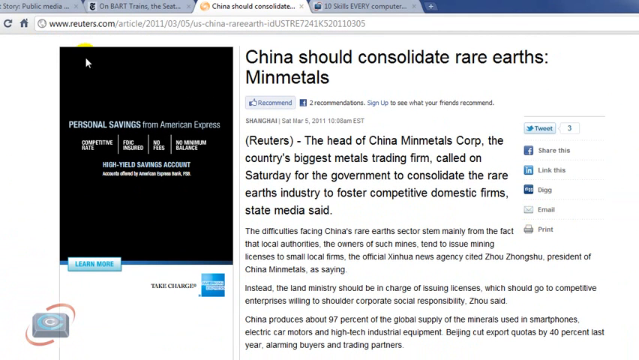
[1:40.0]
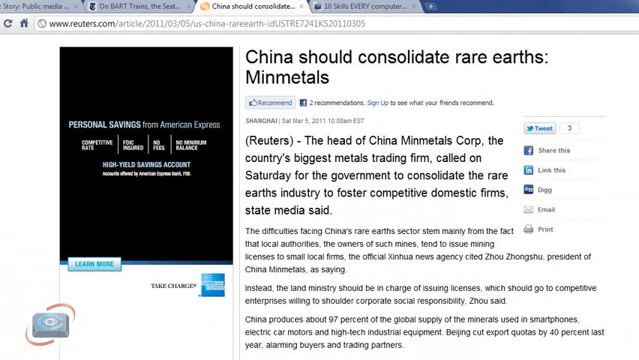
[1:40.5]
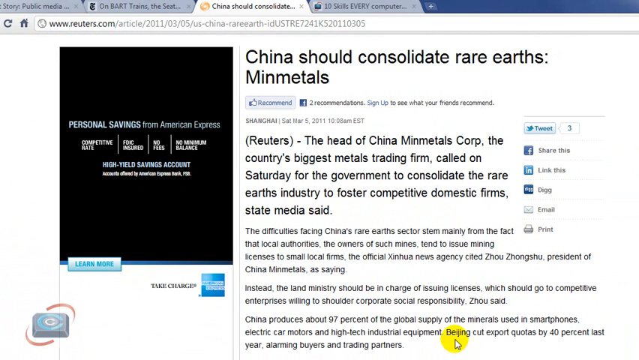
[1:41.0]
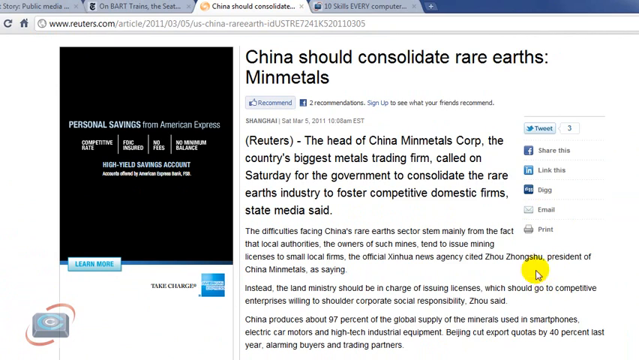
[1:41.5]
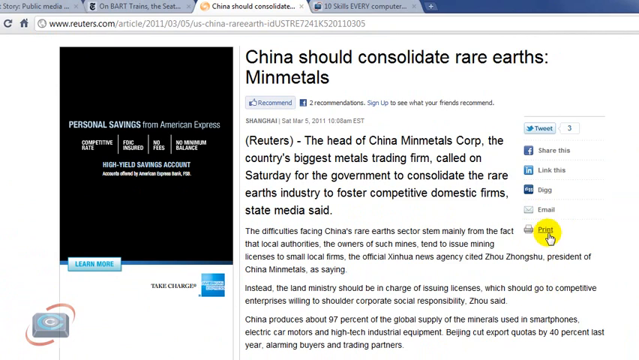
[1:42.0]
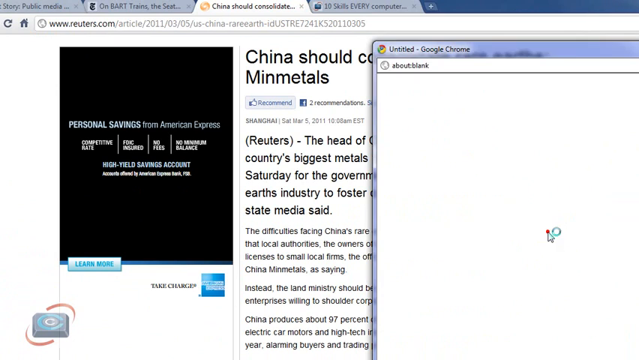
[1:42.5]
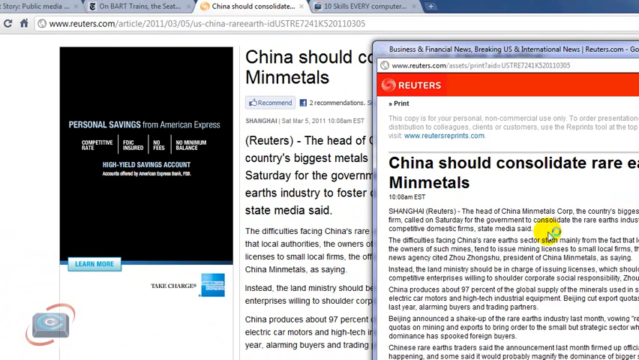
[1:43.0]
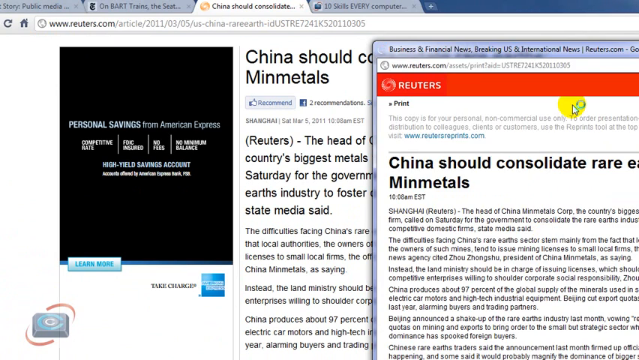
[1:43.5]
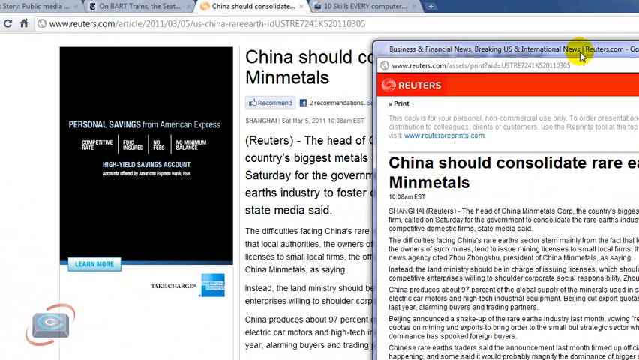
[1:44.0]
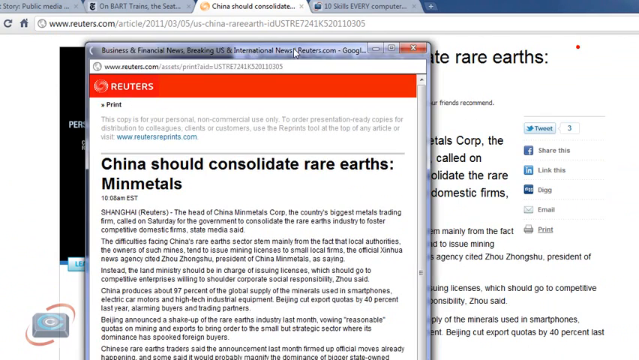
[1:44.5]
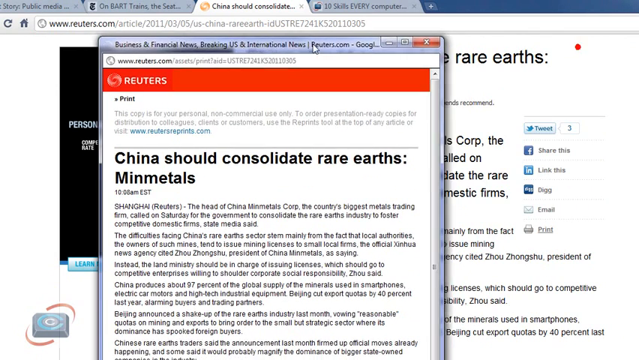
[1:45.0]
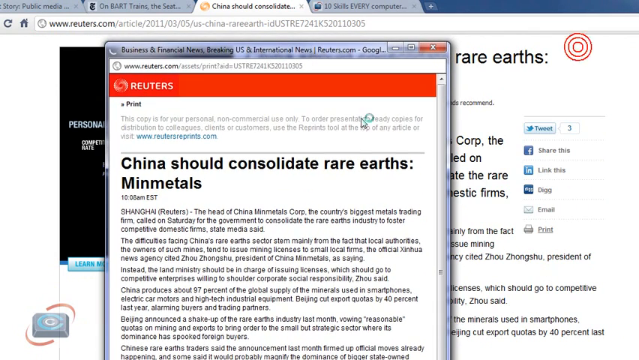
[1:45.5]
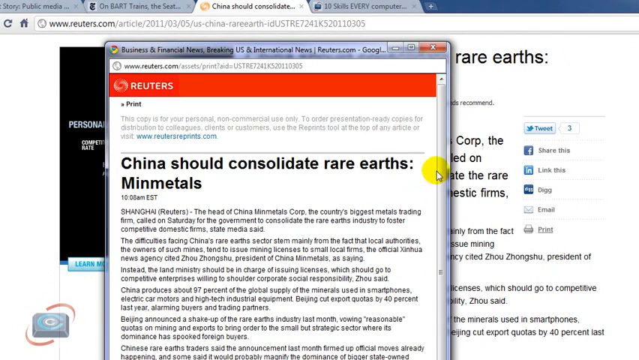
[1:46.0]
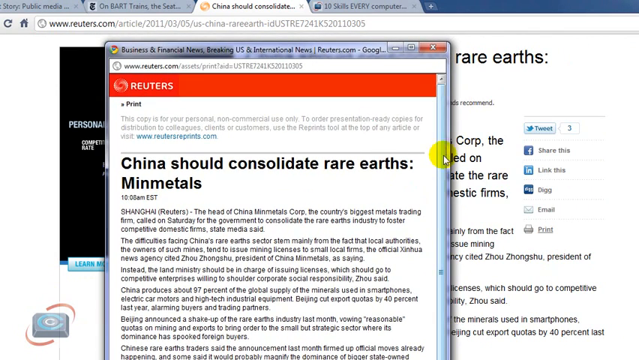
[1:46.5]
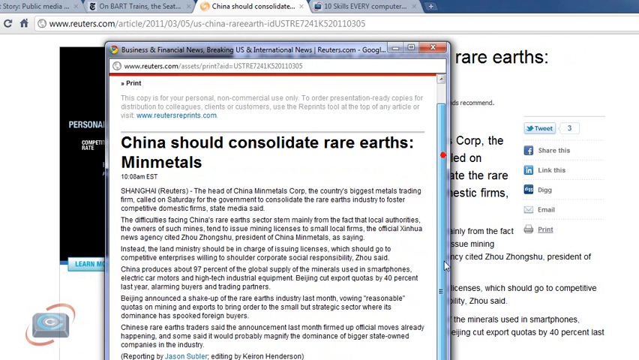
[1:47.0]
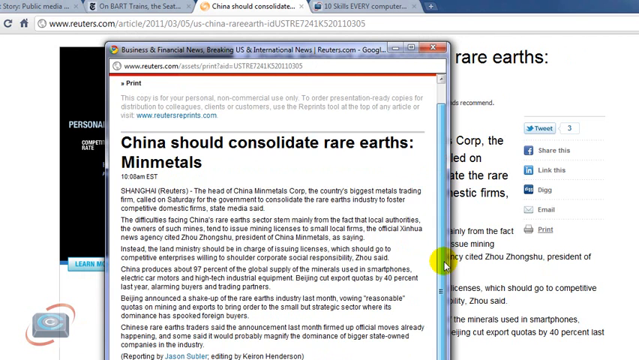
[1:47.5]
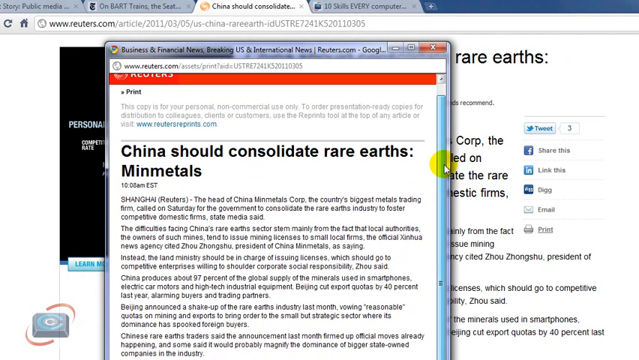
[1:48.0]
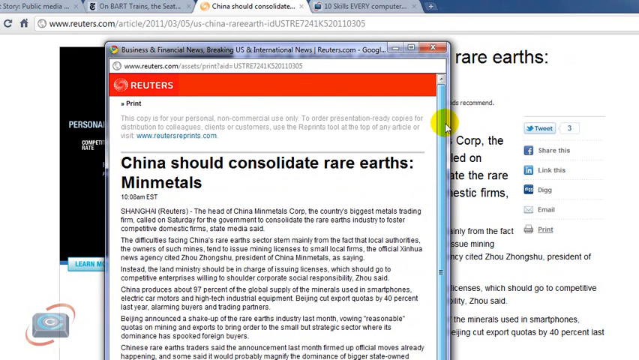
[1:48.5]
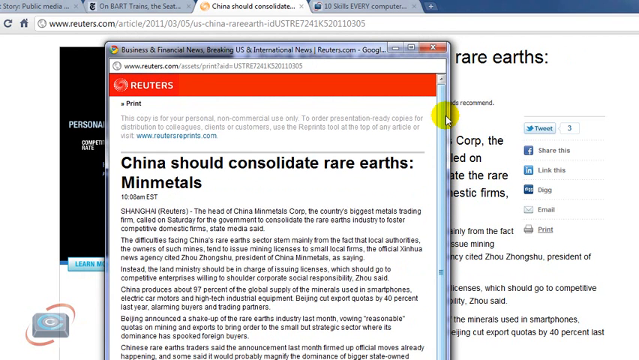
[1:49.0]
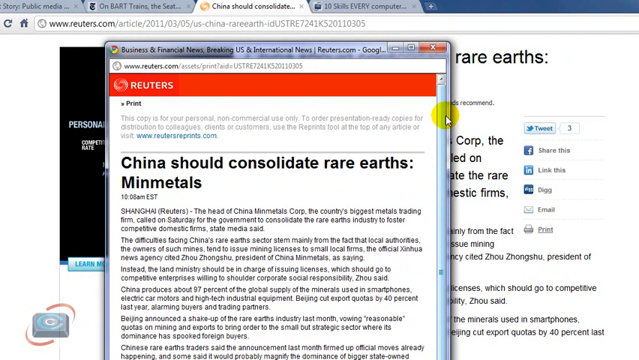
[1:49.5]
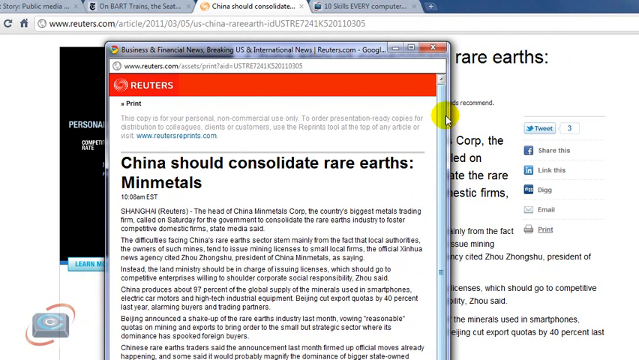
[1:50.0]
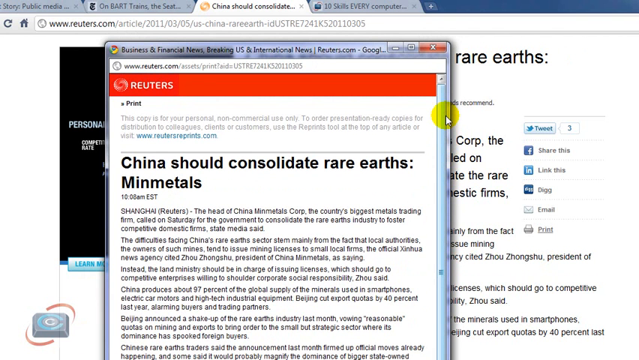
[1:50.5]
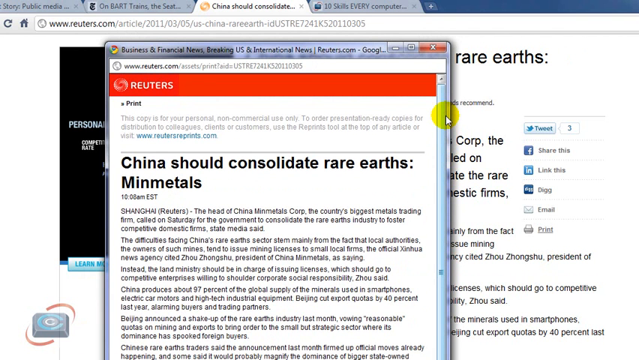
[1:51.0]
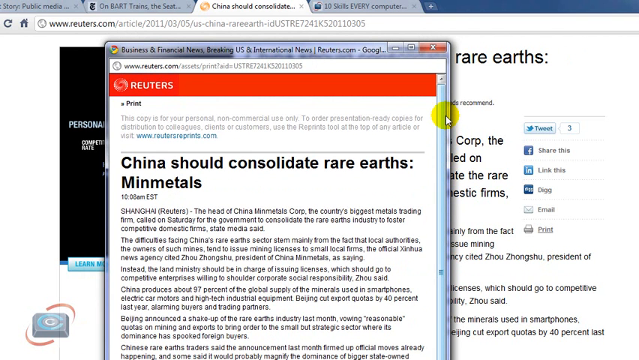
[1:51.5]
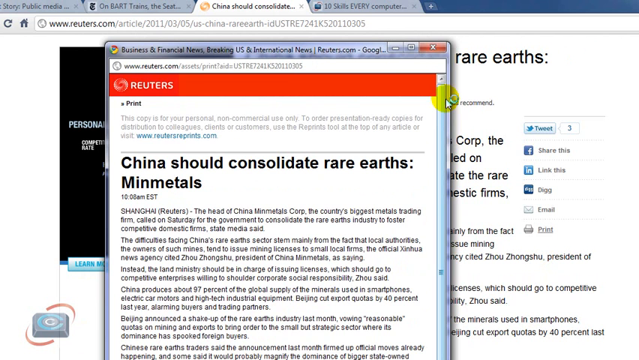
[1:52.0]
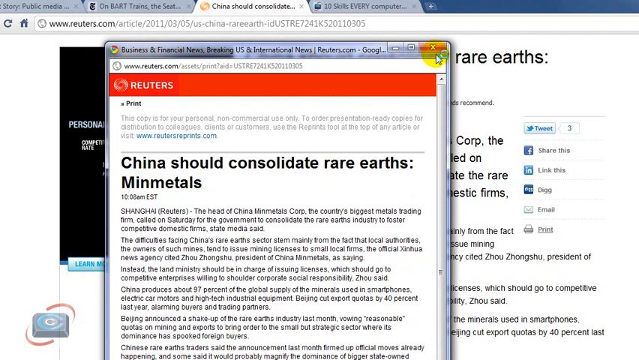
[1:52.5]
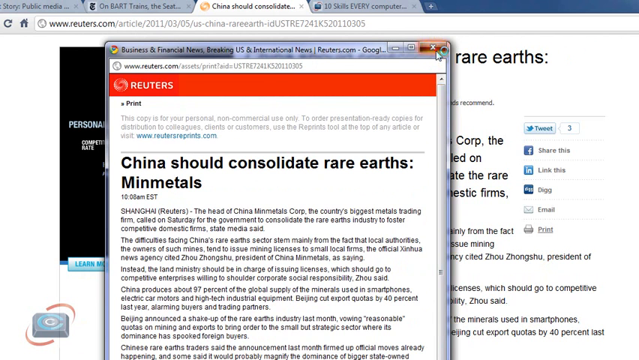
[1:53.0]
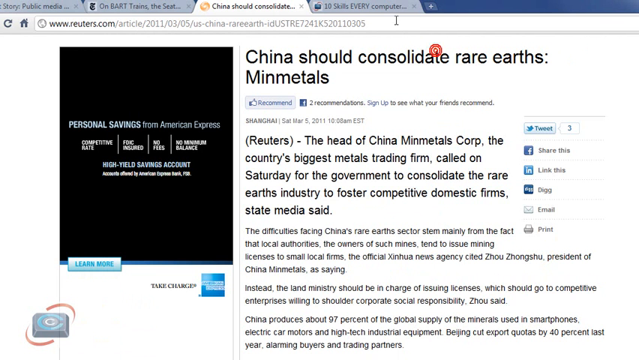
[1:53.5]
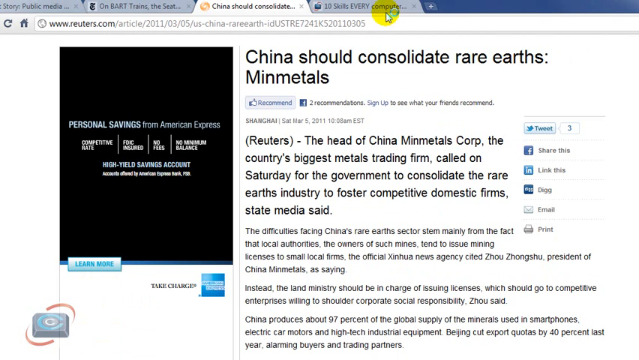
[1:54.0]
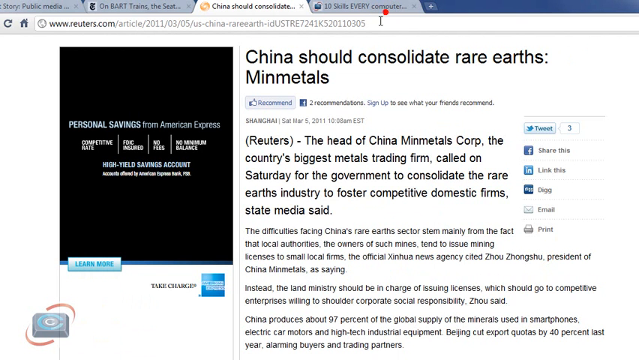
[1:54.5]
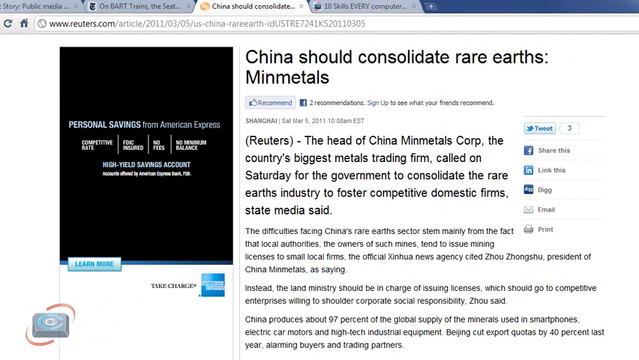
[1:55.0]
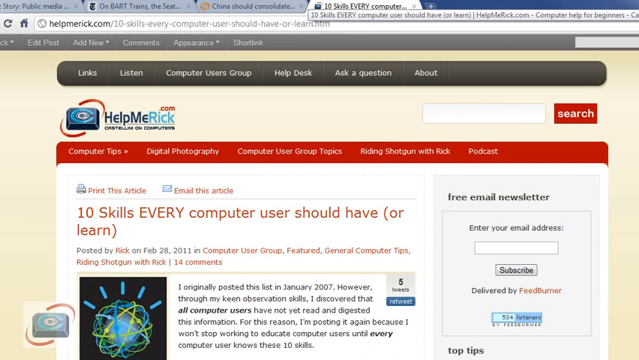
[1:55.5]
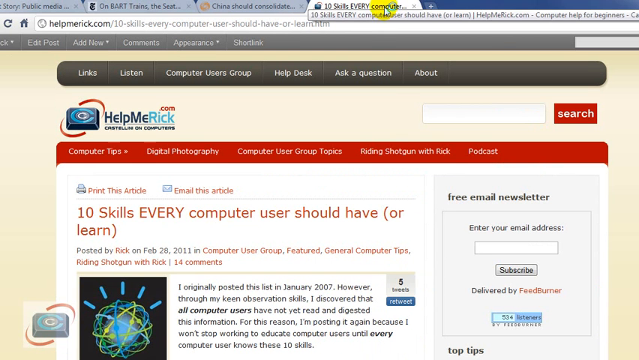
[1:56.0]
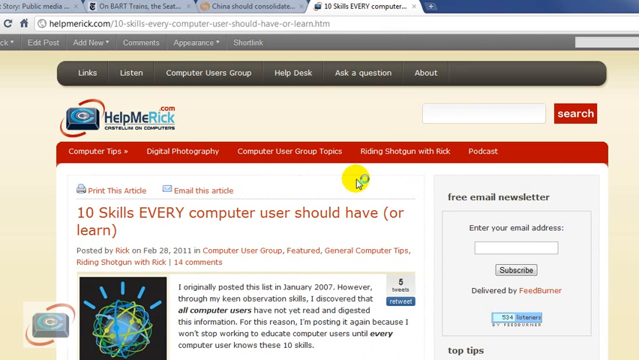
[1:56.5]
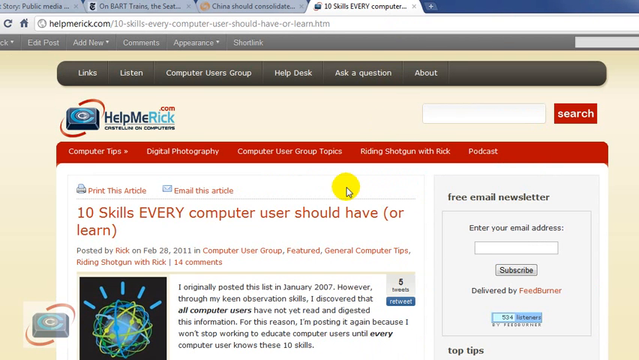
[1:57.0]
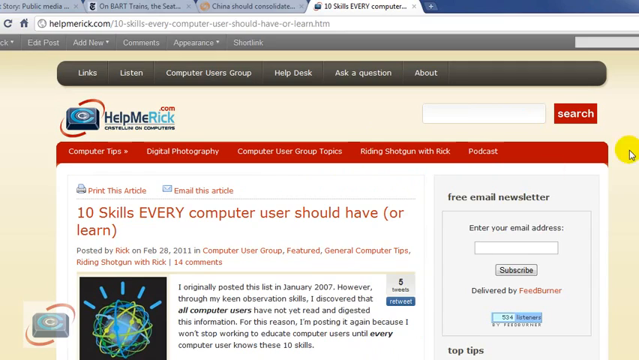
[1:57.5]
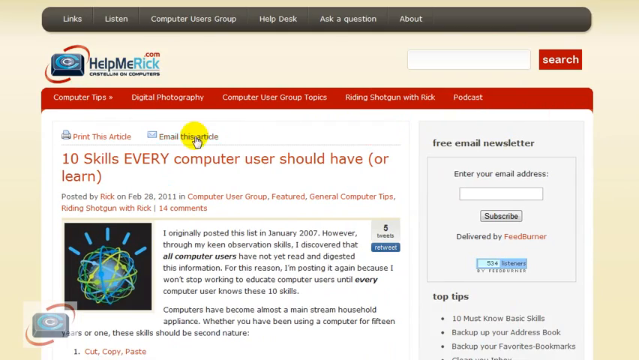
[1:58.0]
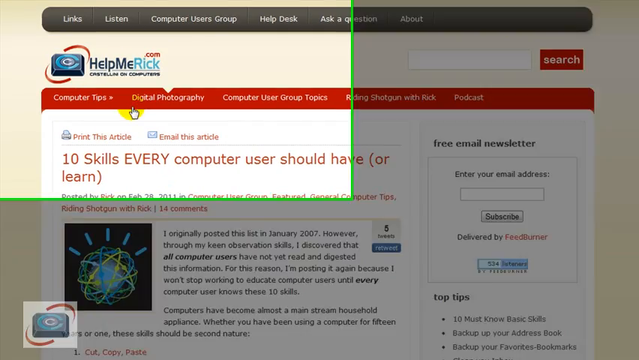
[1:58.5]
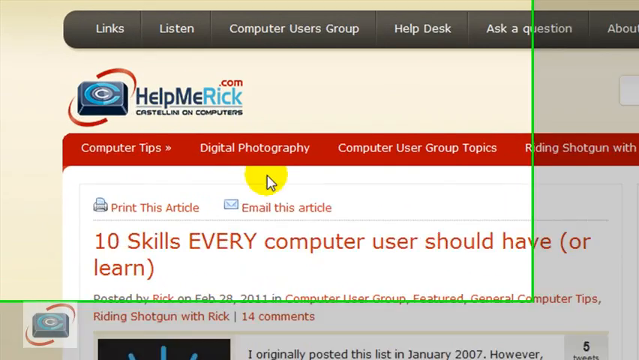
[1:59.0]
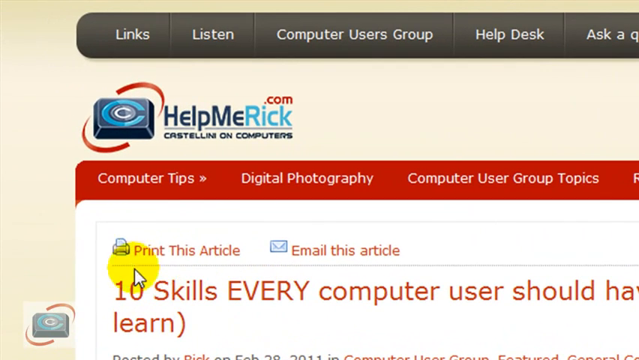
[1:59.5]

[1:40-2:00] A person works the cursor on a website, the white arrow surrounded by yellow moving around the screen. They click on an article about China should consolidate rare earths minmetals, find the print button and click it, which brings up the article as a pop-up. They drag it to the middle of the page and use the blue bar on the right to scroll up. On the right is a red circle with several circles around it. The cursor moves up and down, then clicks a browser at the top, opening a Help Me Rick website with a blue title. The cursor goes to the print button and apparently clicks it.